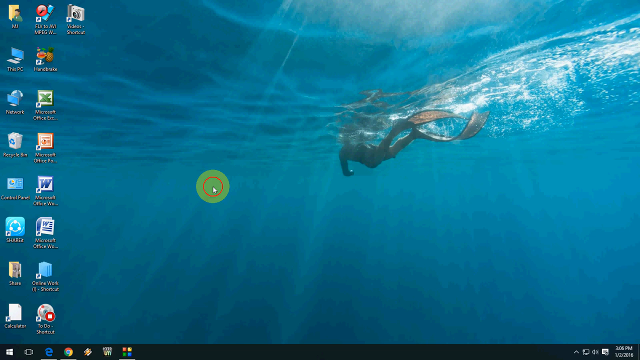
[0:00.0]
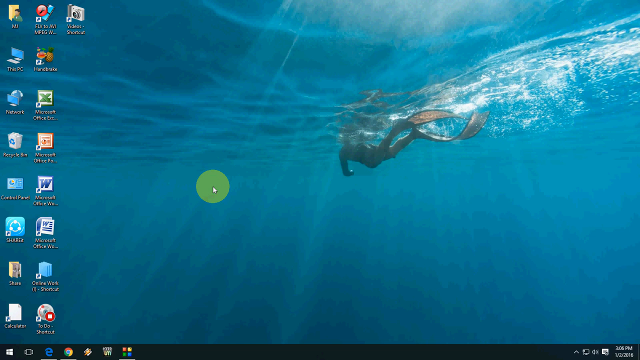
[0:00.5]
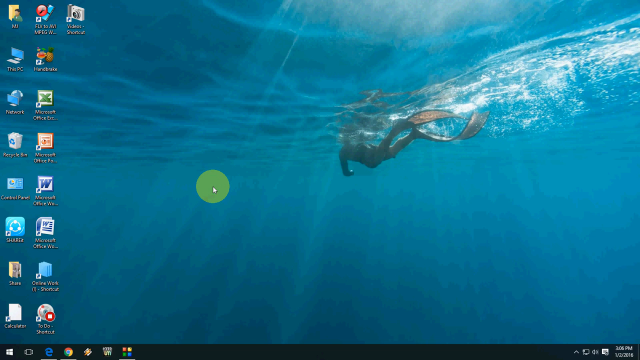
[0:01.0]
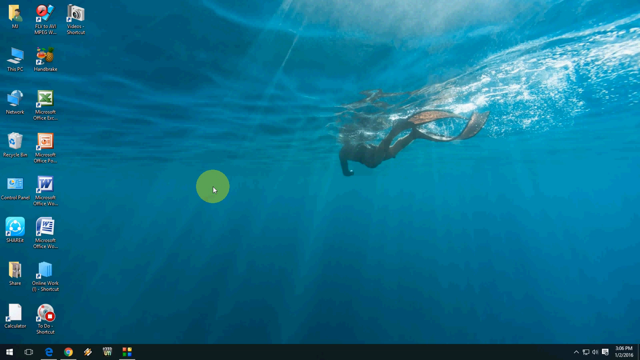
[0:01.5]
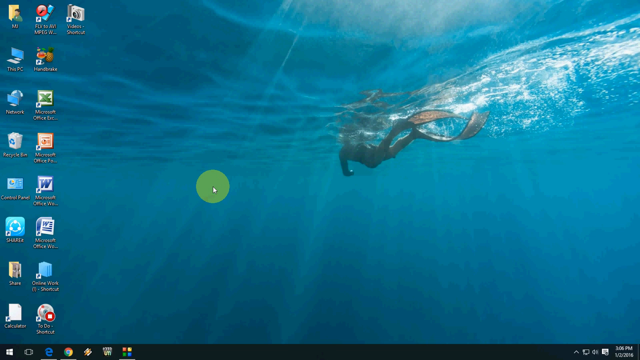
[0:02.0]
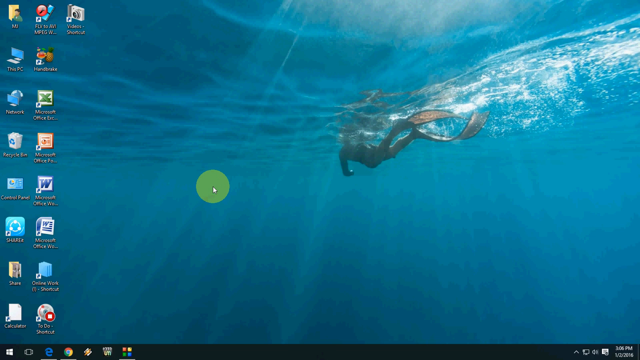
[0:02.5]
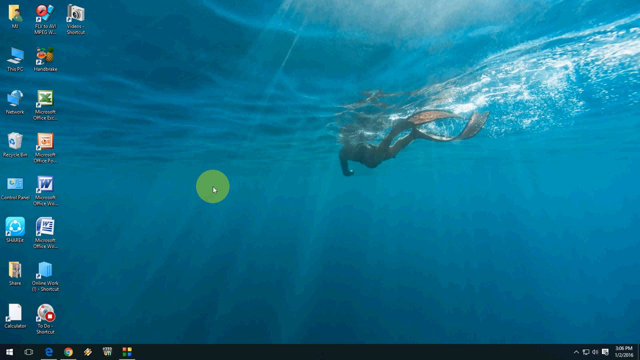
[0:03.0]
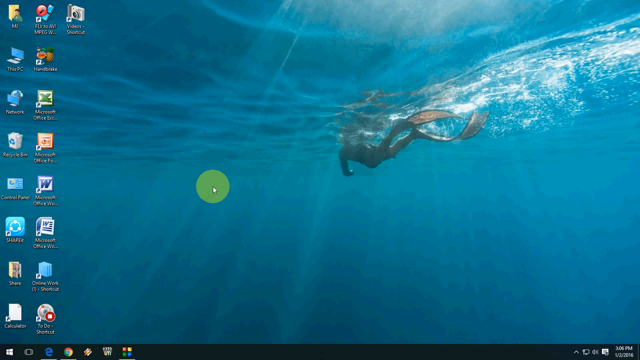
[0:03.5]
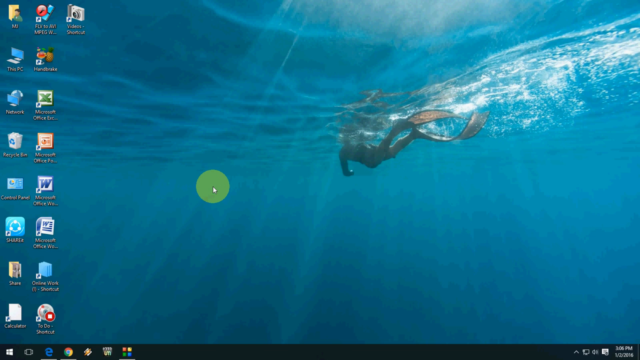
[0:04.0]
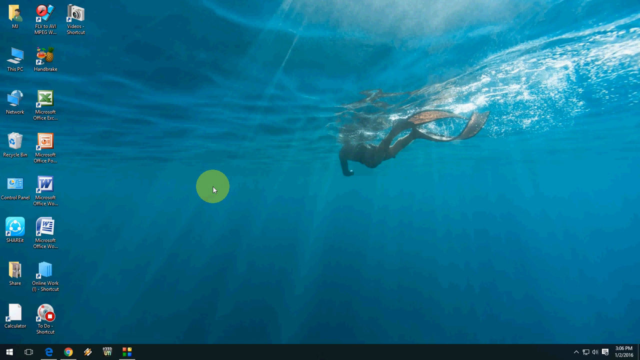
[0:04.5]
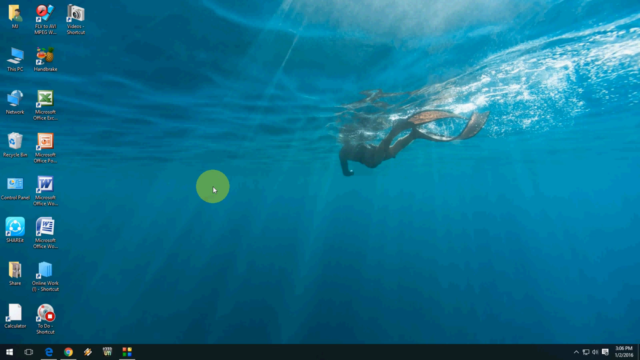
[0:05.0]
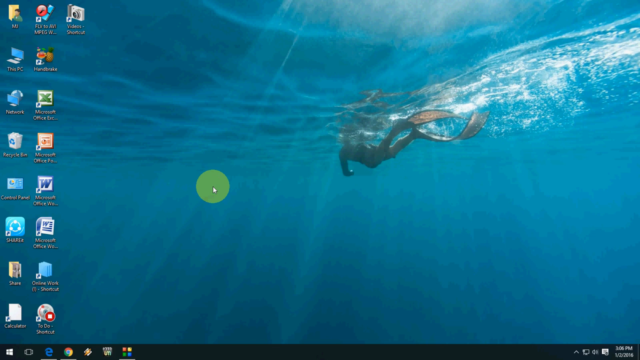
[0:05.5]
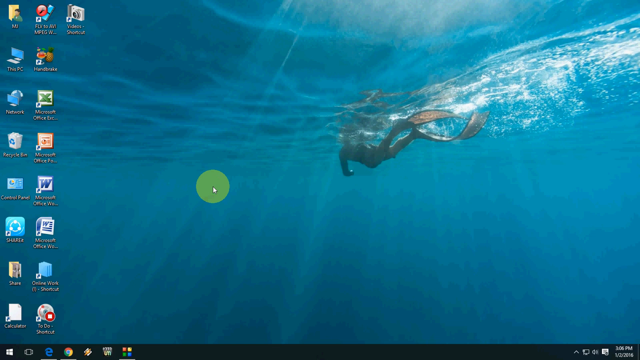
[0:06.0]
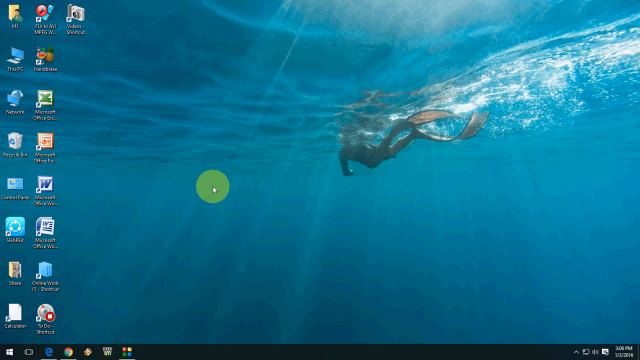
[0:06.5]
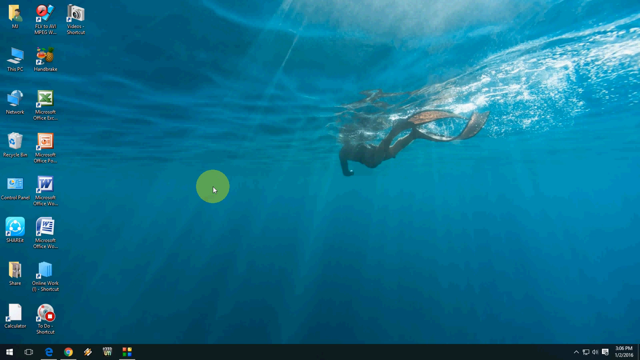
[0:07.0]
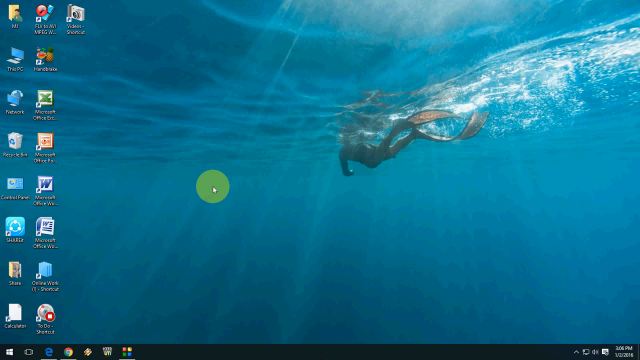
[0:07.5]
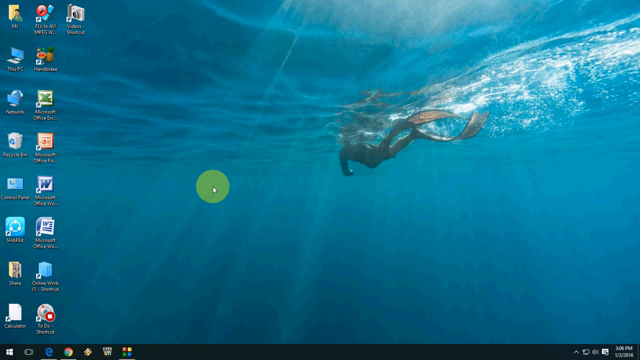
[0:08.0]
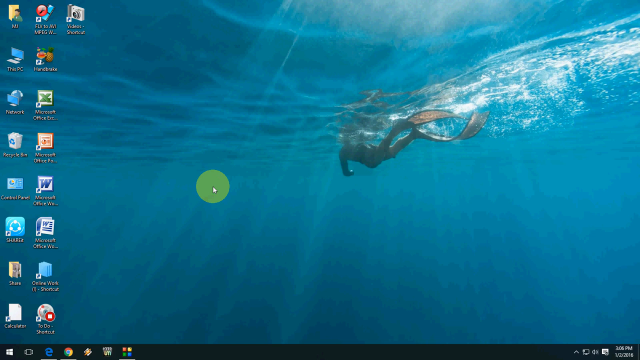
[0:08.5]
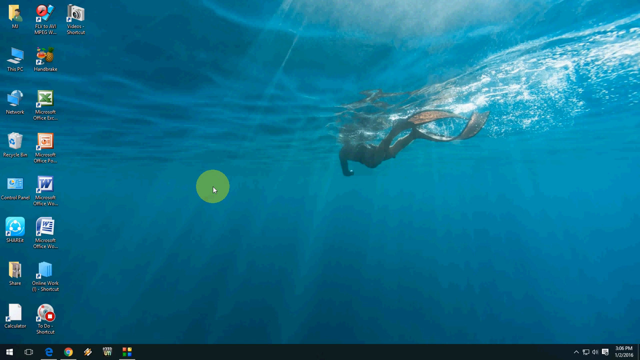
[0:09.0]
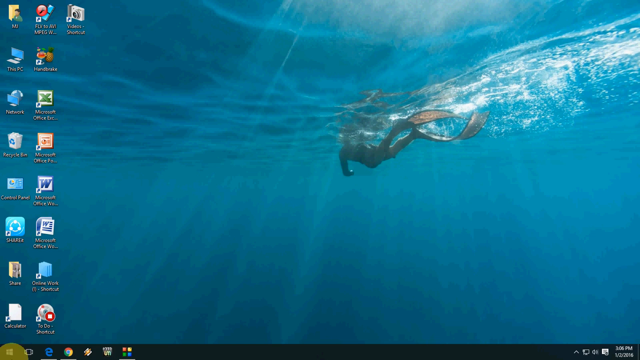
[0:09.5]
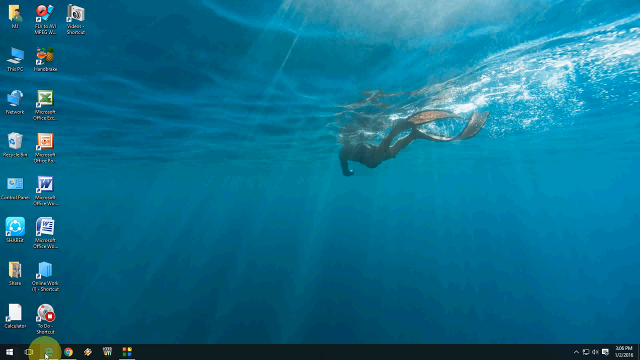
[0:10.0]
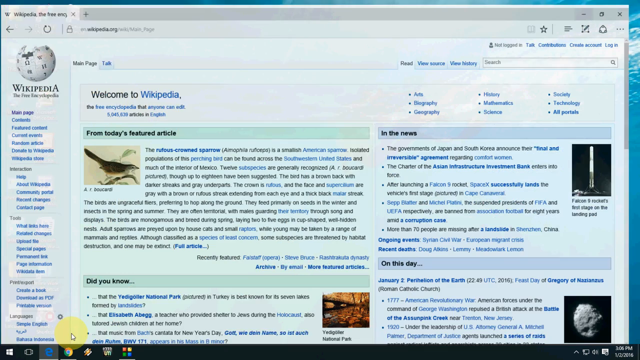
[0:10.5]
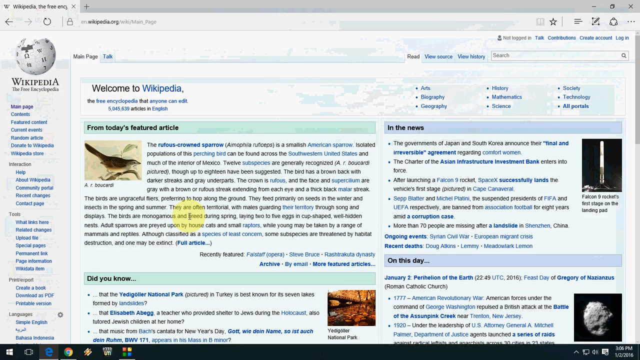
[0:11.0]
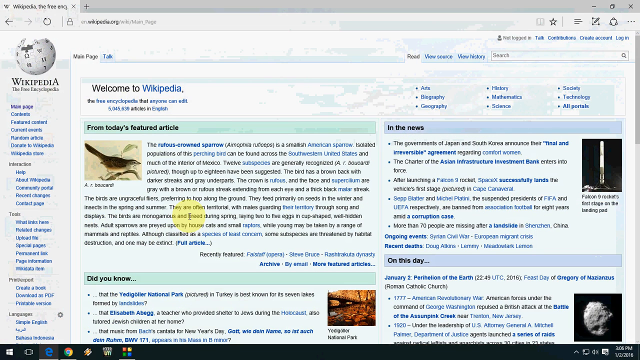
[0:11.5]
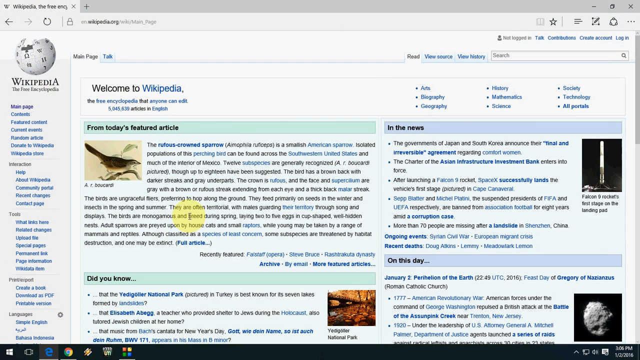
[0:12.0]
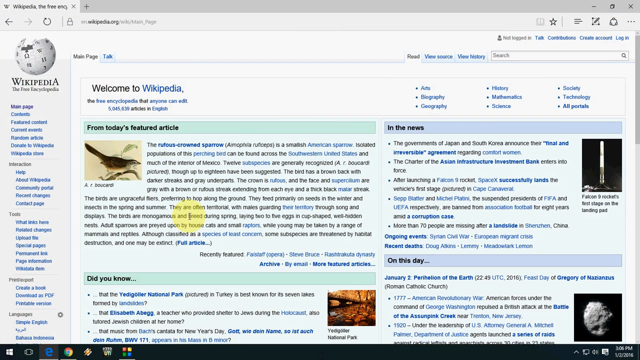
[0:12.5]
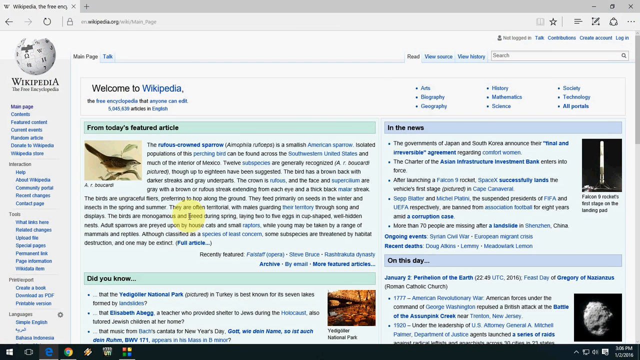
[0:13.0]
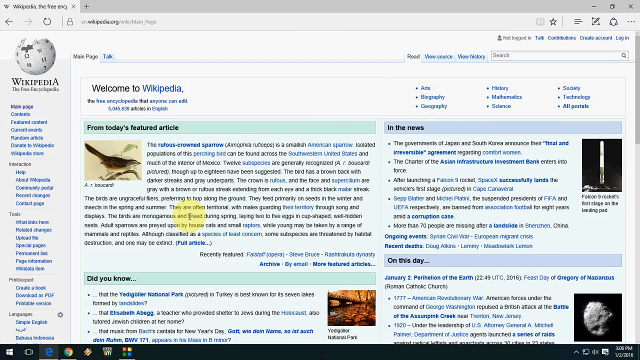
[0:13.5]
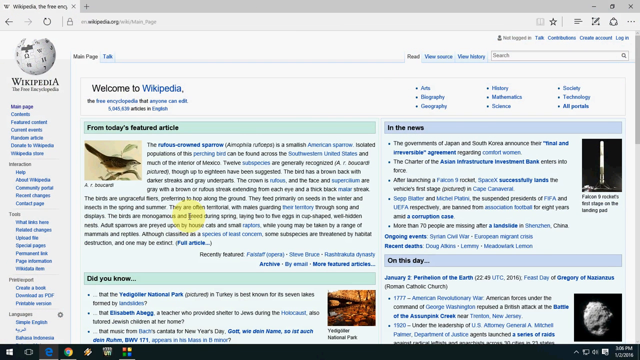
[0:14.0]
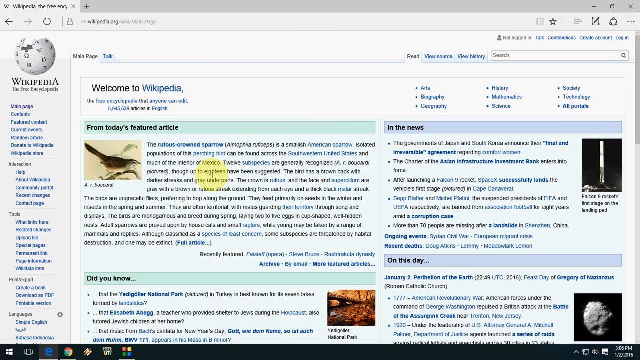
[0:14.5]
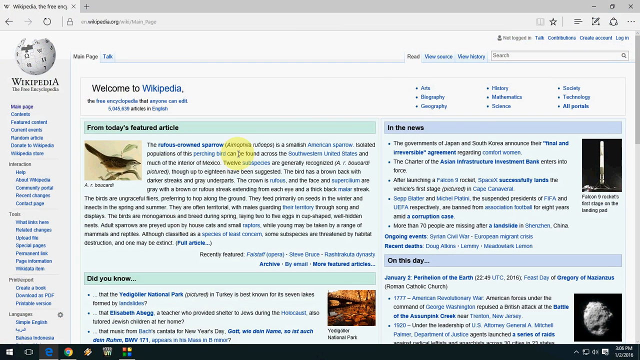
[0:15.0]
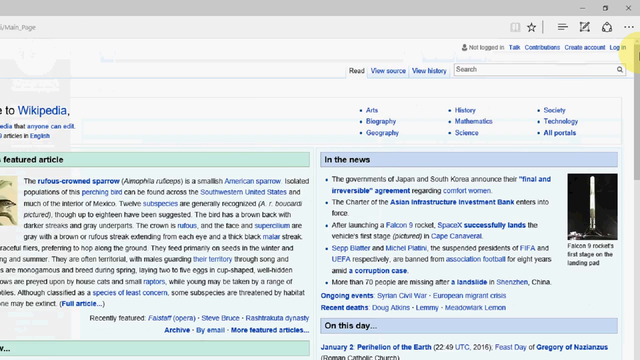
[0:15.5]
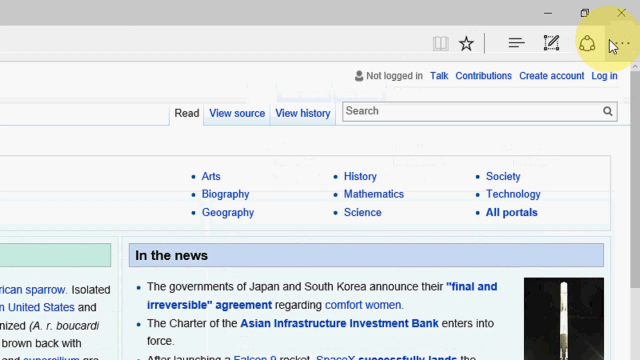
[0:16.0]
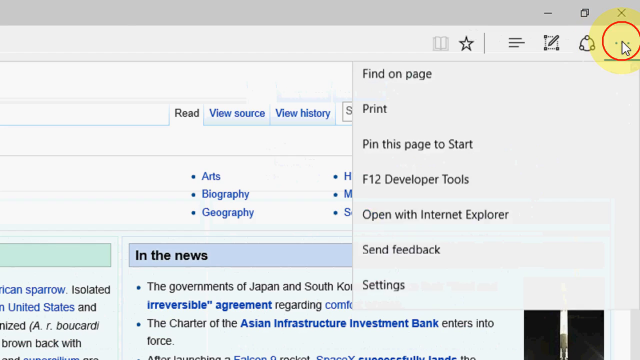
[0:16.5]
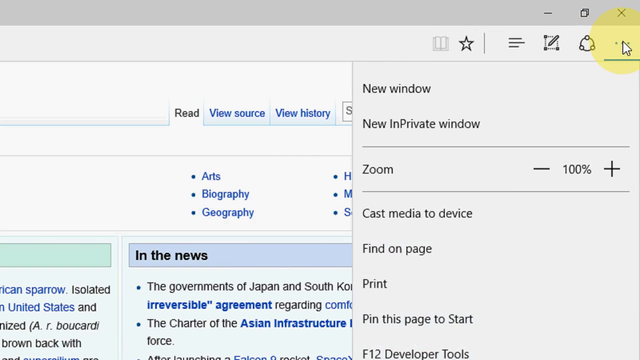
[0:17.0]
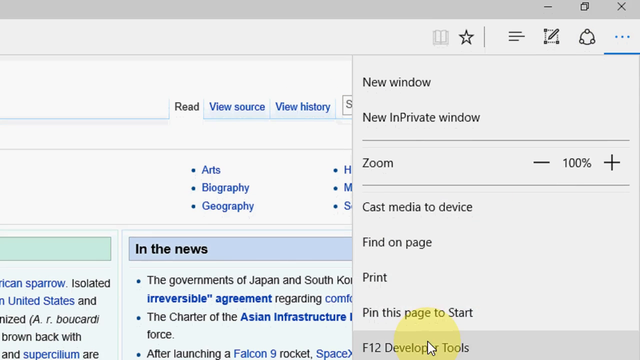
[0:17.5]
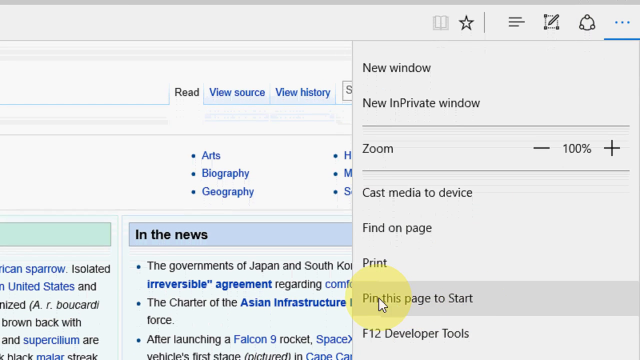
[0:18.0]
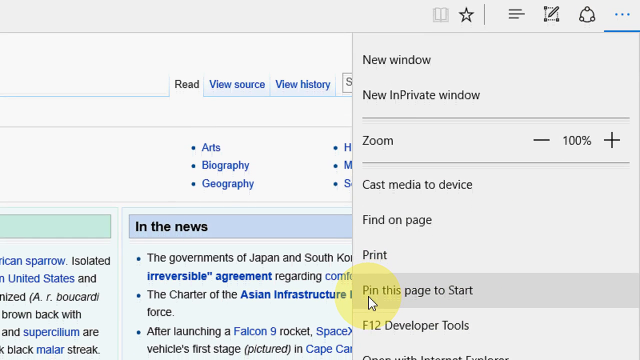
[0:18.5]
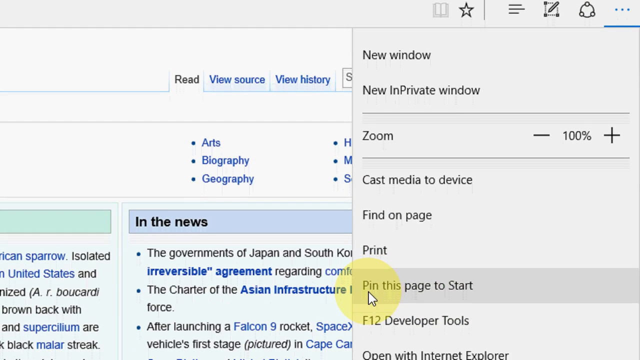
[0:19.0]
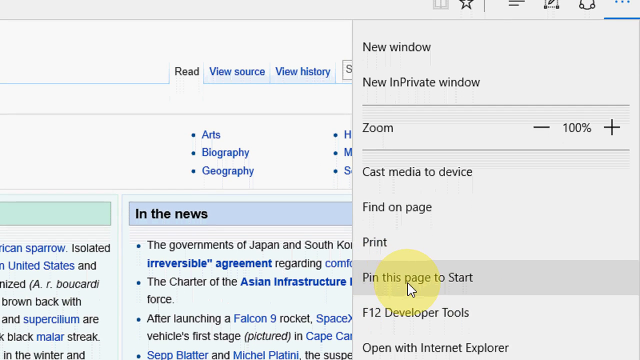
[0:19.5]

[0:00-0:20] A computer's desktop home screen appears, with icons on the left and a wallpaper showing someone swimming in water. The icons are typical Windows icons, such as Microsoft Word, File Explorer, This PC and Microsoft Excel, 17 in total. The swimmer is under the water right at the surface and wears fins on their feet; the swimmer's gender is unclear. The screen then flashes to a Wikipedia web page titled "Welcome to Wikipedia", with "From Today's Featured Article" beneath it. The mouse moves, clicks the three dots at the top right of the browser, and then clicks "pin to this browser". The mouse moves again and the screen flashes back to the desktop, which shows the same wallpaper of the person swimming.